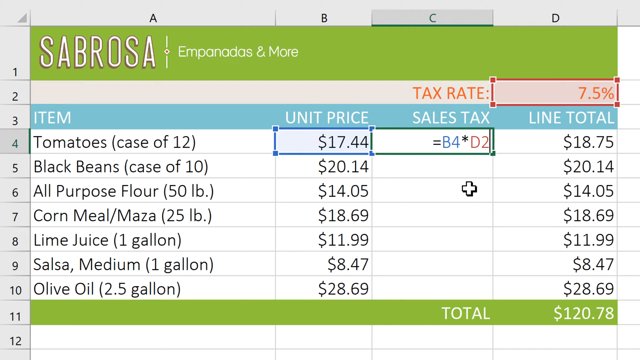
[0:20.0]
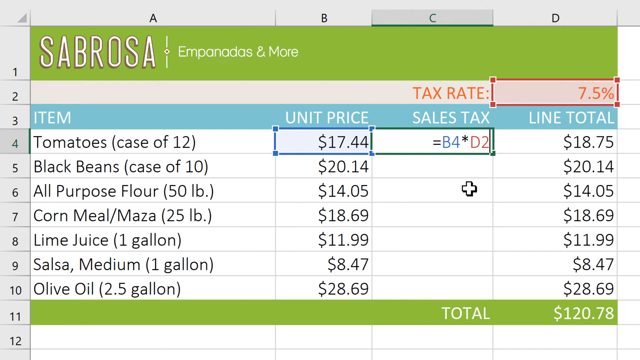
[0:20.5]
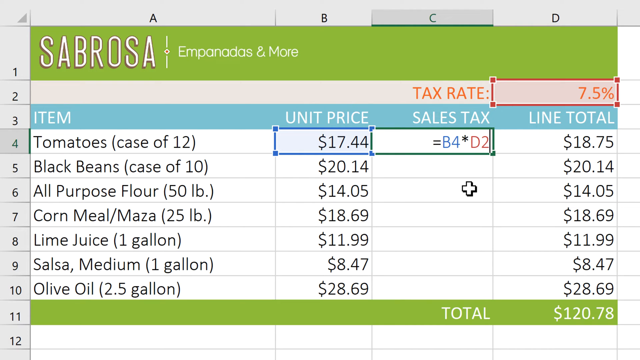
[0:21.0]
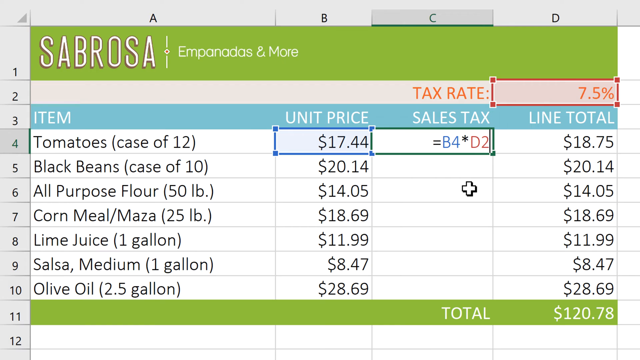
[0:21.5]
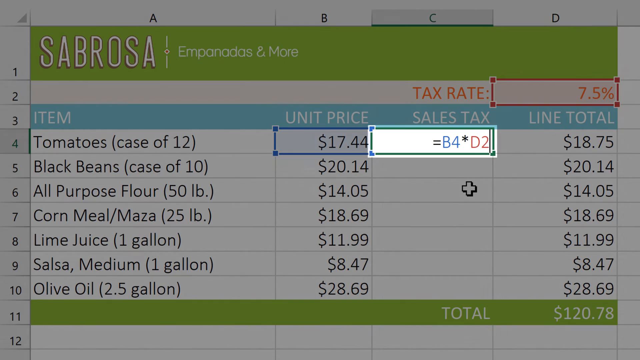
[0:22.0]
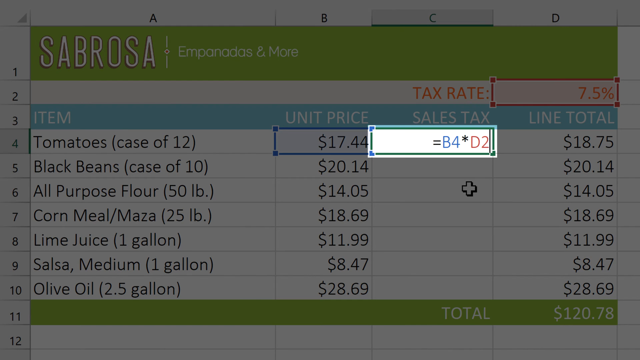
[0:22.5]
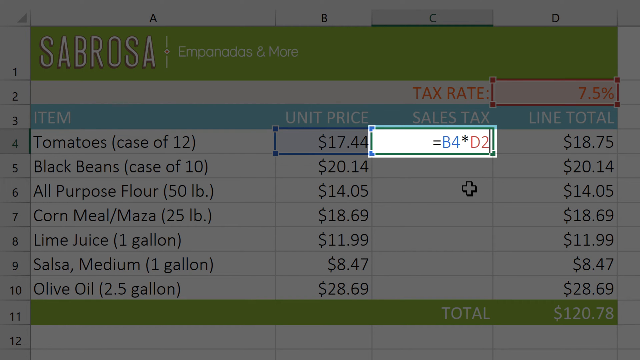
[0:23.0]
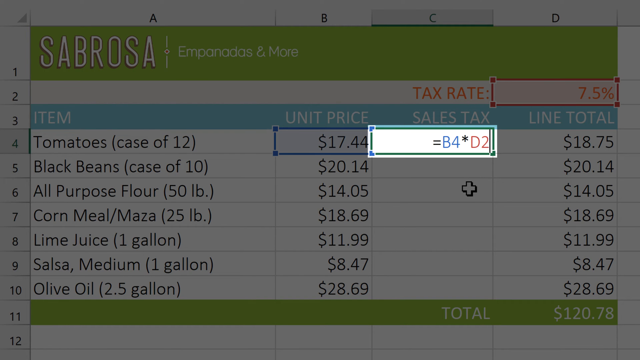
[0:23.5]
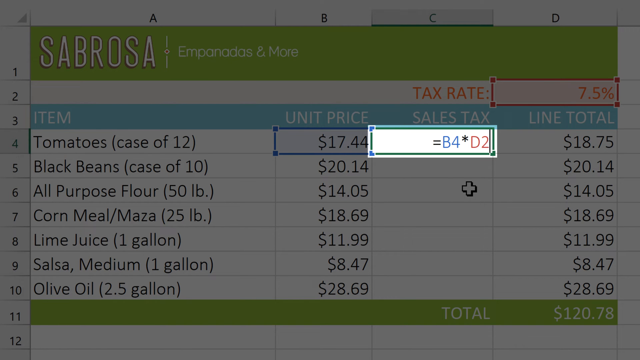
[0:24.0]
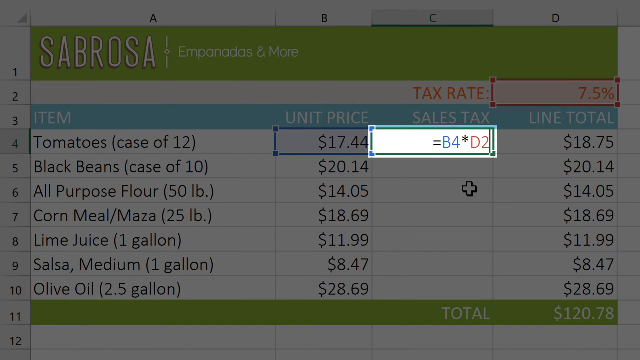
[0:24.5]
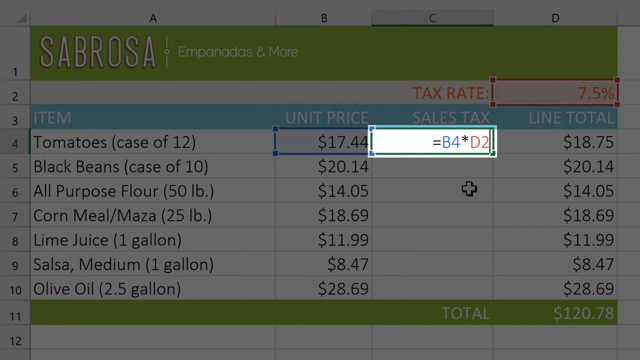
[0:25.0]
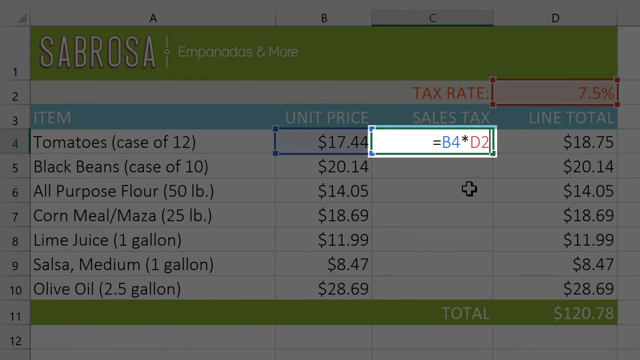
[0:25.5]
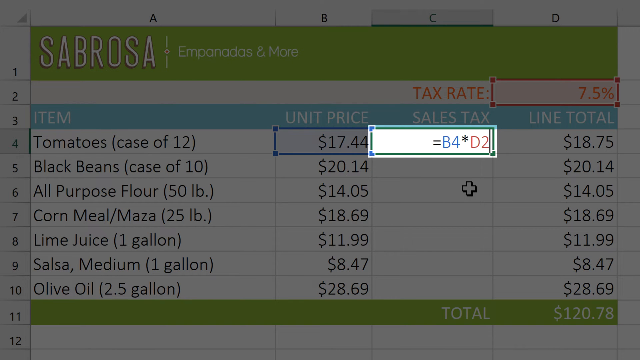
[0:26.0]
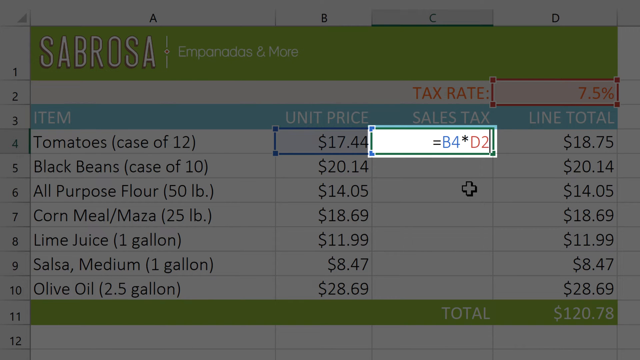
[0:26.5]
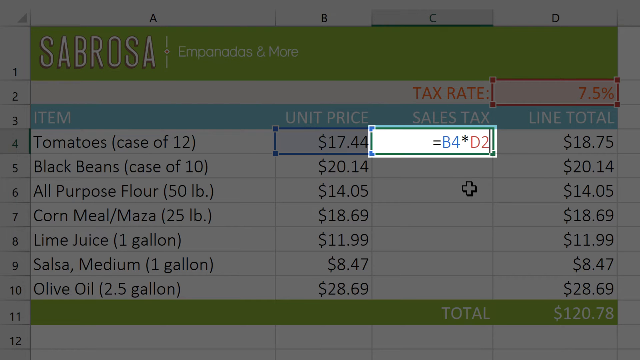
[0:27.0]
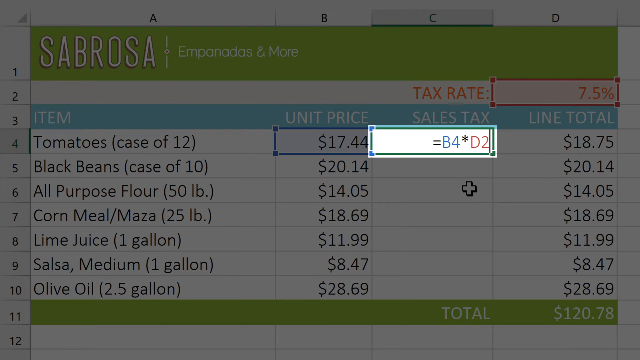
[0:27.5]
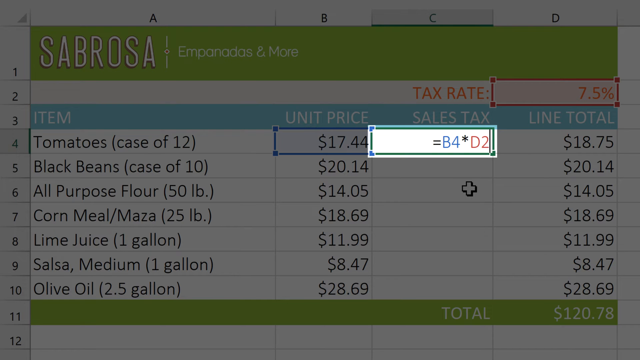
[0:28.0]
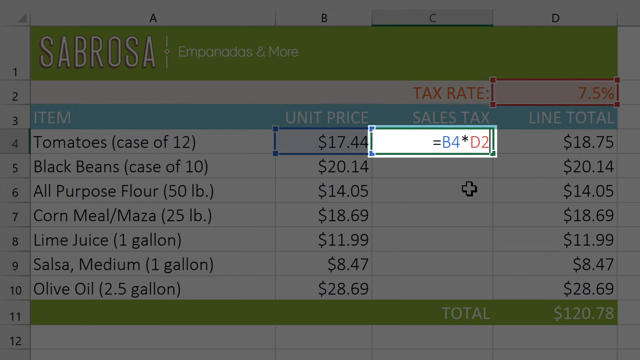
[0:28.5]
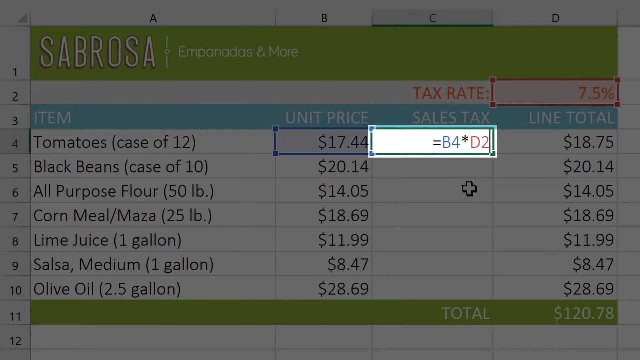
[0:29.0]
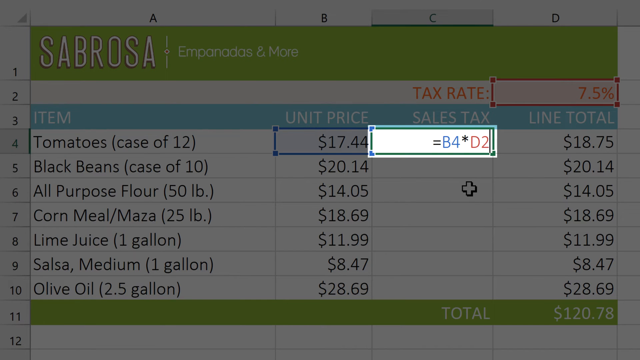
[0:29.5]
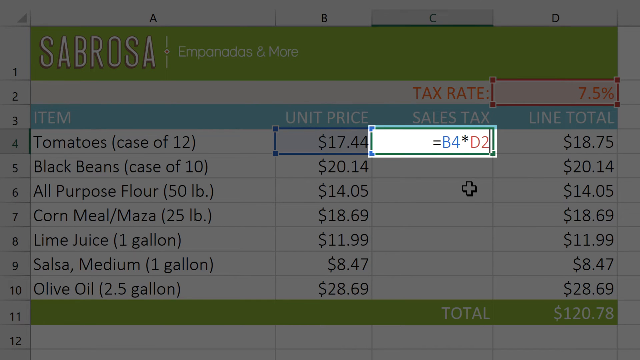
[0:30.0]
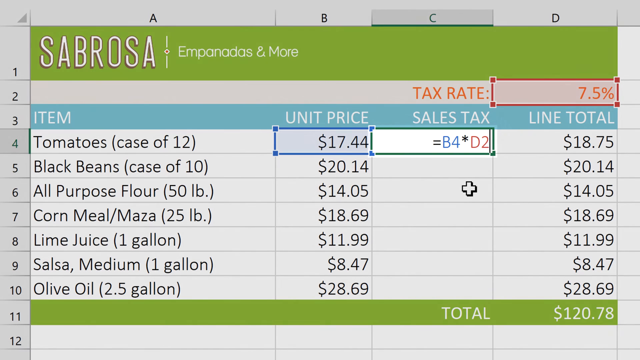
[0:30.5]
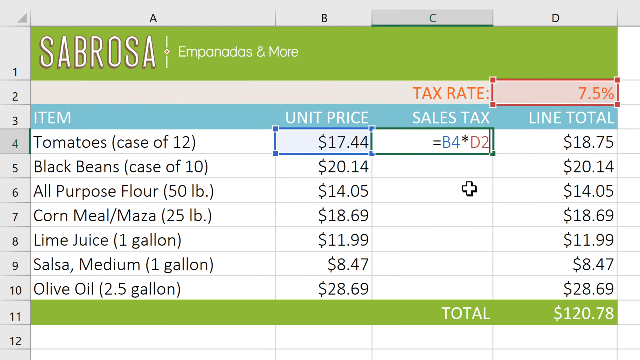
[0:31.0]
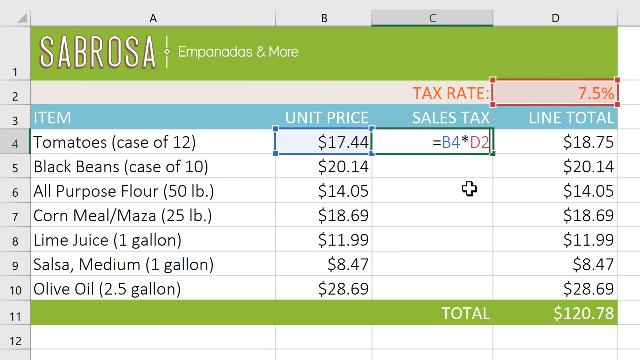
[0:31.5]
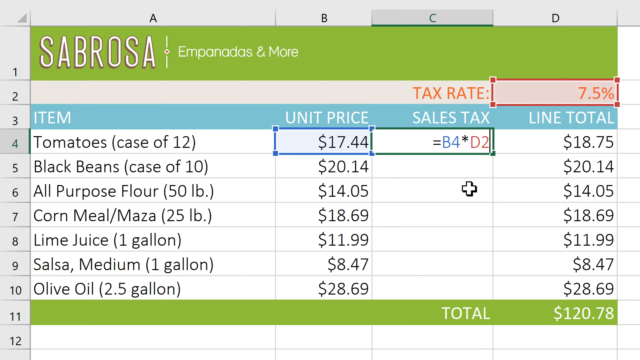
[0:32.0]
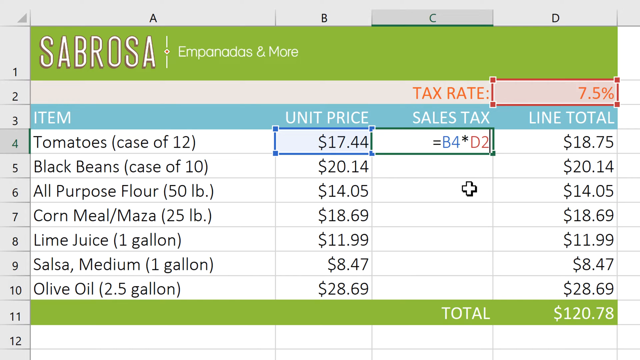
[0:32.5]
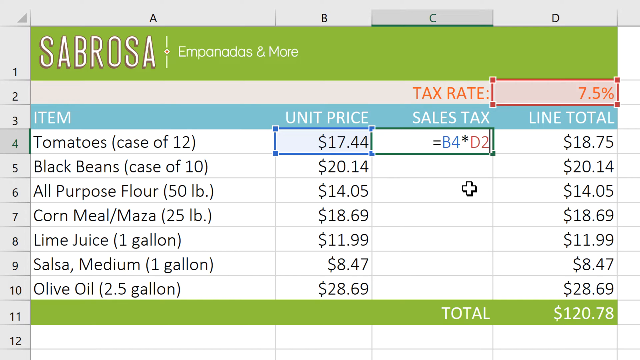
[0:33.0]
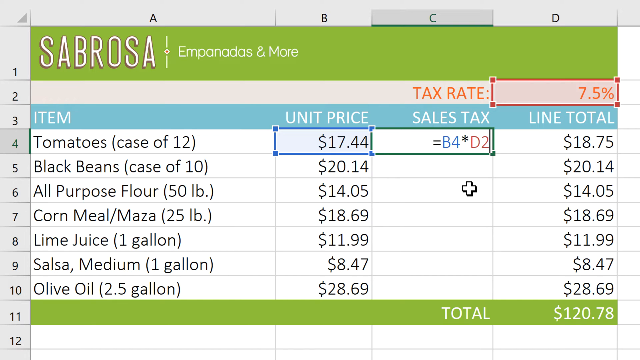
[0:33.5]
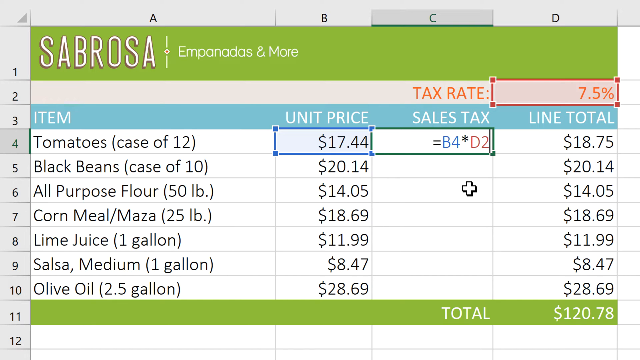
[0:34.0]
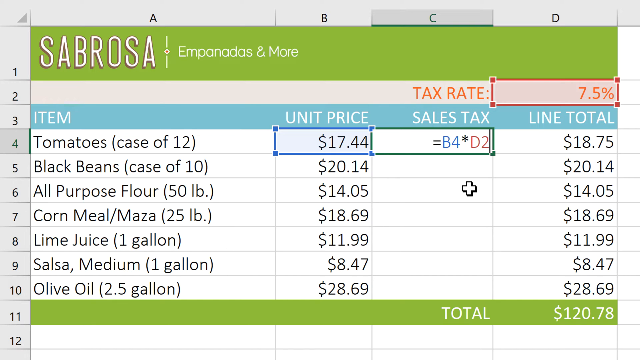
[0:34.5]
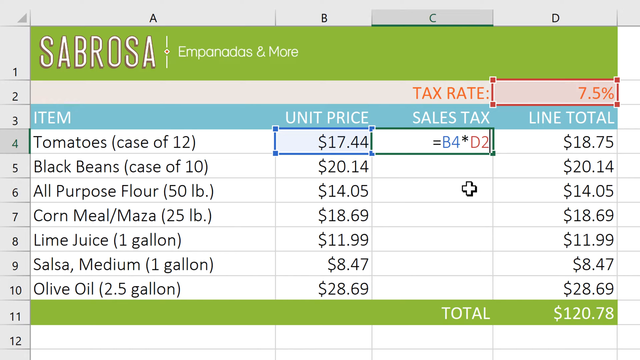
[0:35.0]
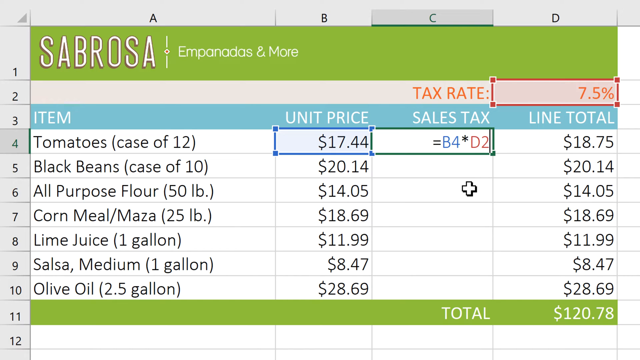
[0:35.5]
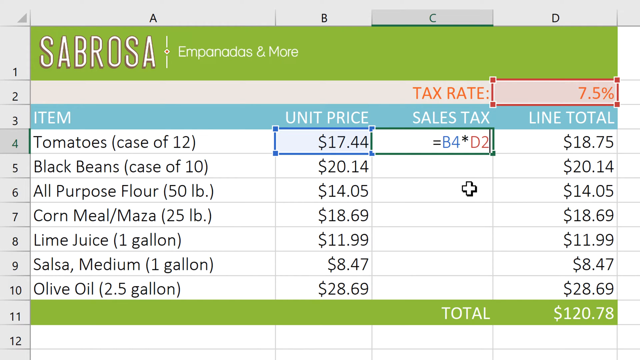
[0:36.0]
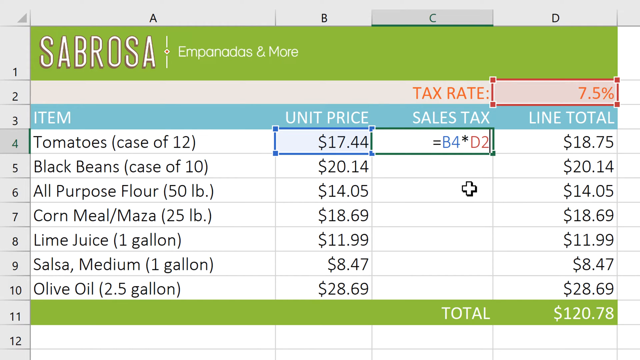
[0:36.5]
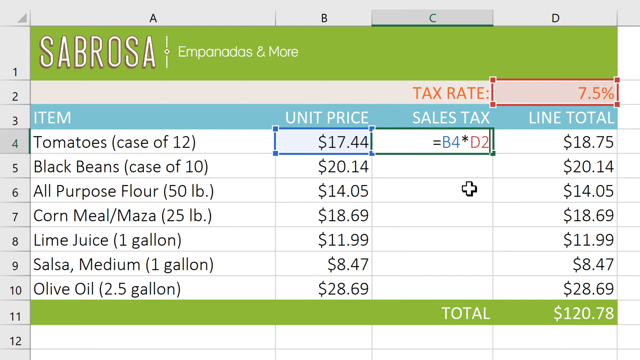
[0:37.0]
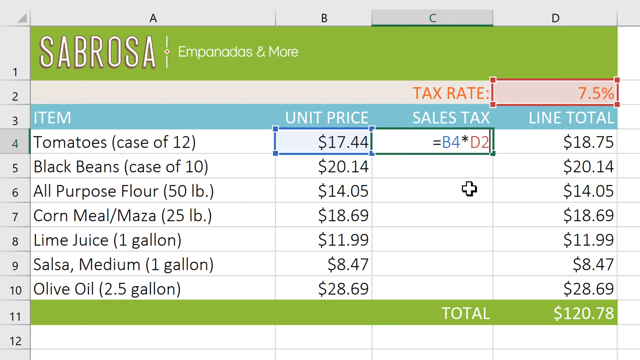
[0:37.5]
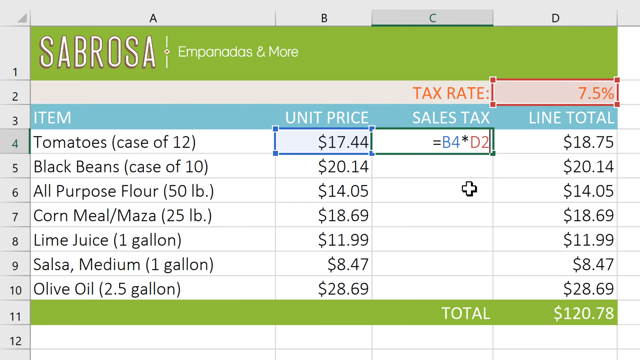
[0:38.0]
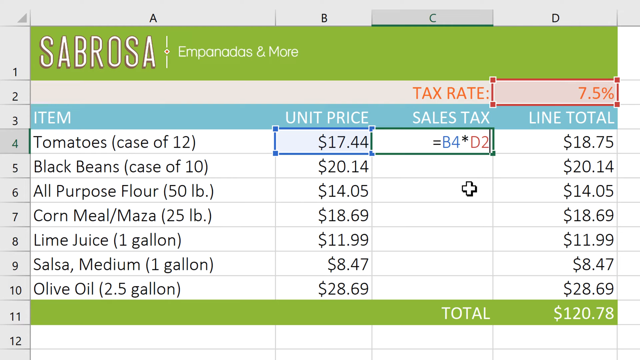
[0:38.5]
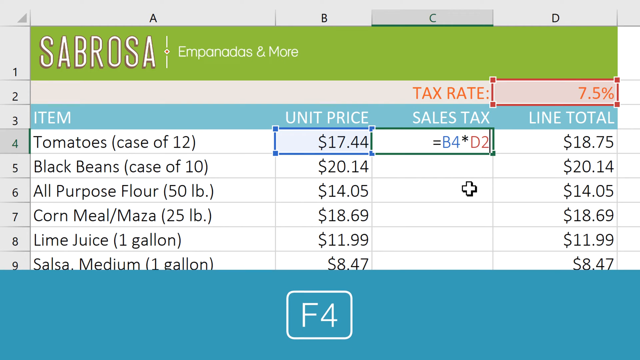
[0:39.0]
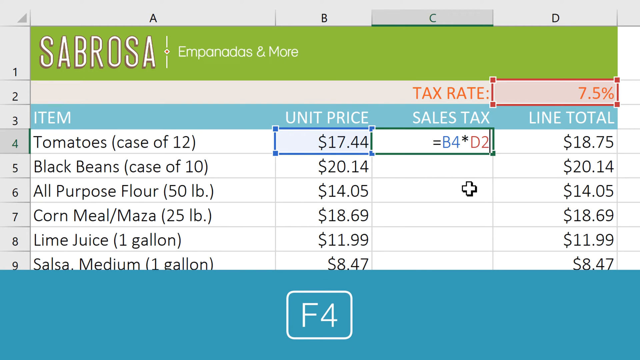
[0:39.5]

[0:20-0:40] The Sabrosa Empanadas and more page lists items with columns for unit price, sales tax, tax rate and line total, and the tax rate shows 7.5 percent. Tomatoes, case of 12, have a unit price of $17.44, a sales tax of B4D2, and a line total of $18.75. Black beans, case of 12, have a unit price and line total of $20.14. All-purpose flour, 50 LB, is $14.05 for both unit price and line total. Cornmeal or masa, 25 LB, is $18.69 for both. Lime juice, one gallon, is $11.99 for both. Salsa medium, one gallon, is $8.47 for both. Olive oil, 2.5 gallons, is $28.69 for both. The overall total is $120.78.